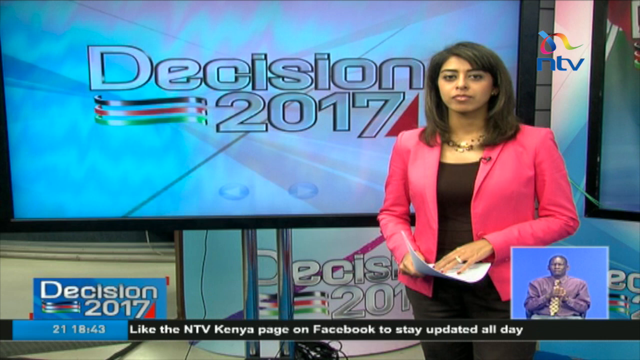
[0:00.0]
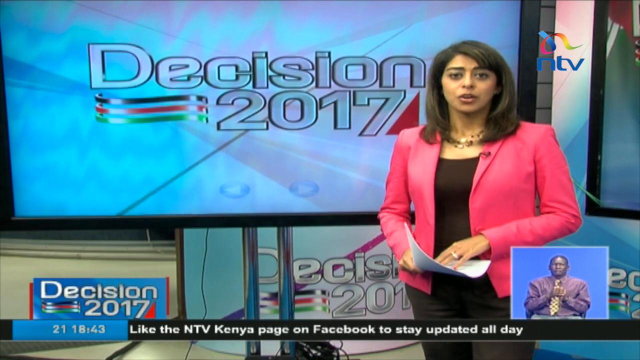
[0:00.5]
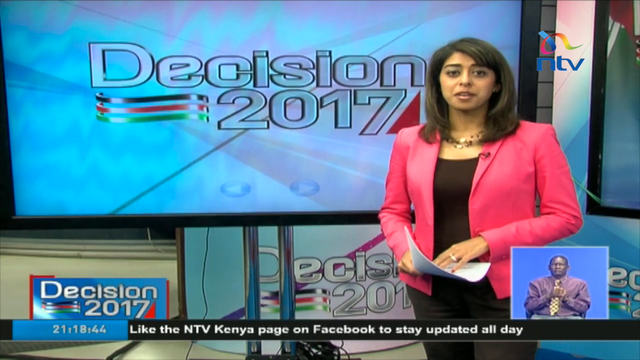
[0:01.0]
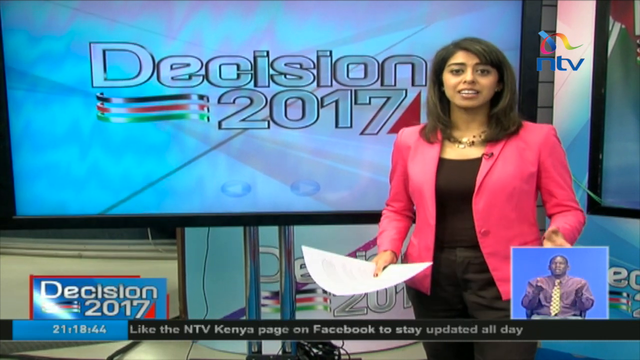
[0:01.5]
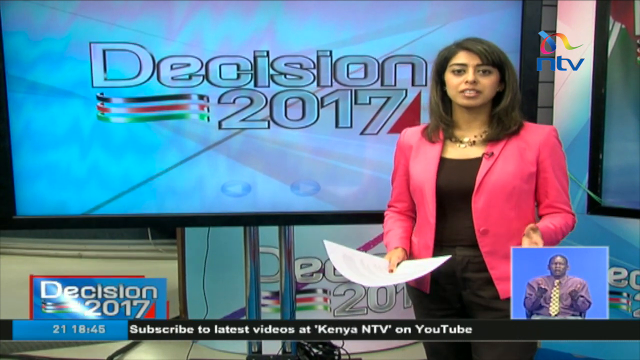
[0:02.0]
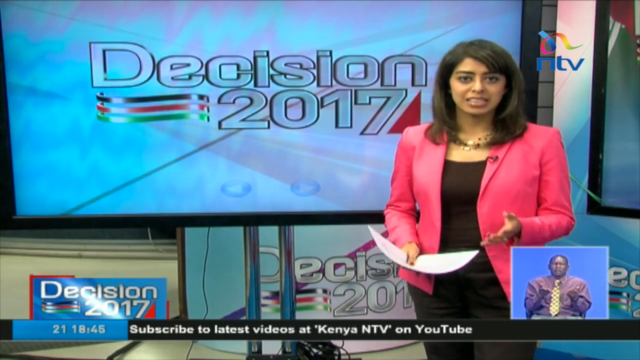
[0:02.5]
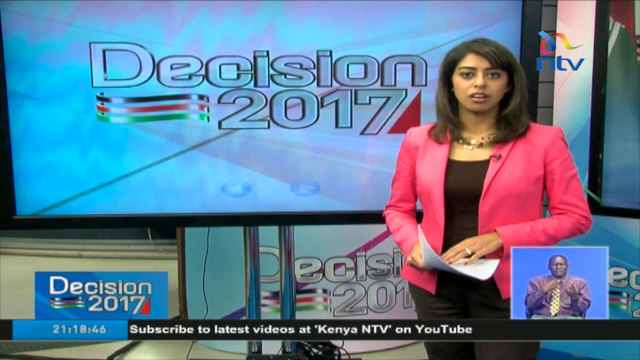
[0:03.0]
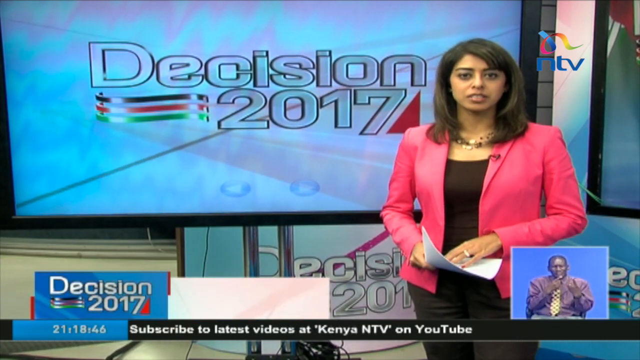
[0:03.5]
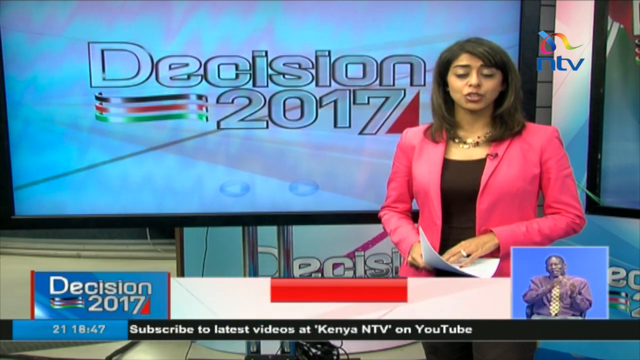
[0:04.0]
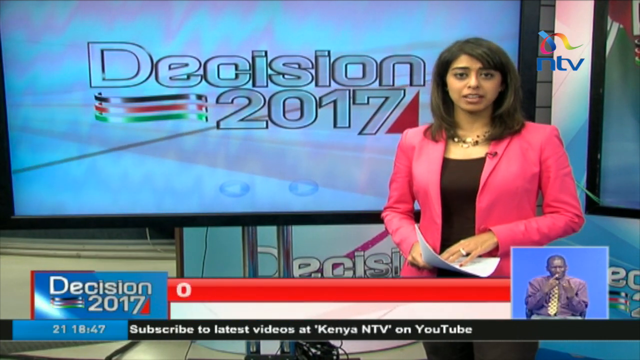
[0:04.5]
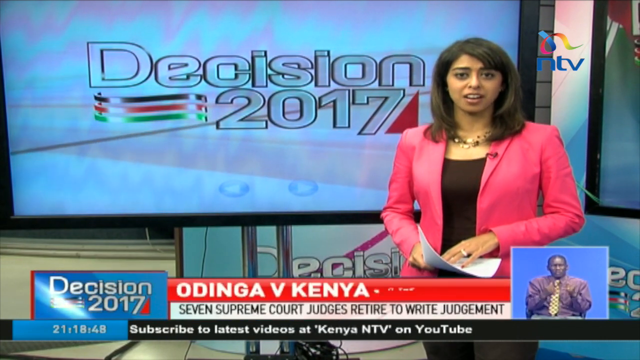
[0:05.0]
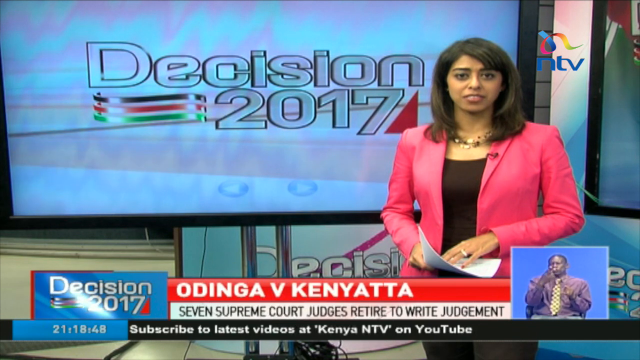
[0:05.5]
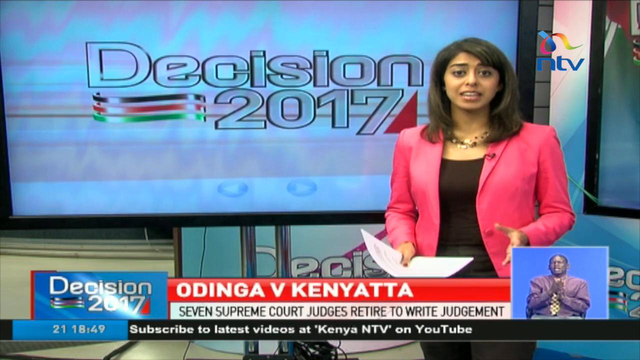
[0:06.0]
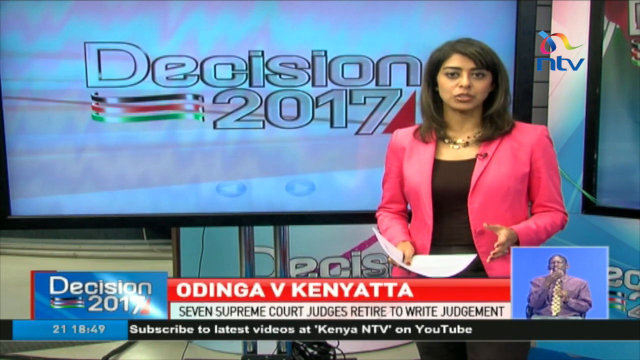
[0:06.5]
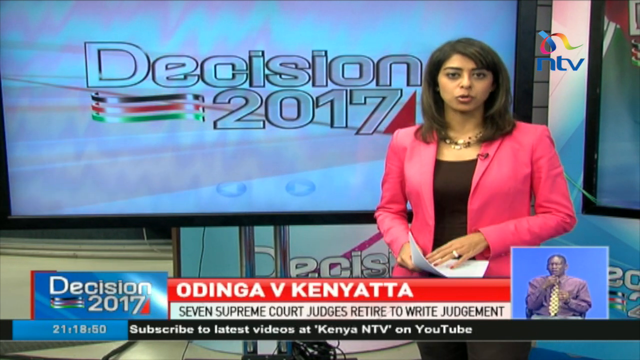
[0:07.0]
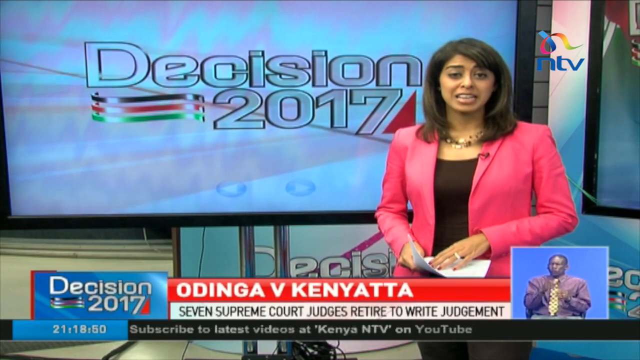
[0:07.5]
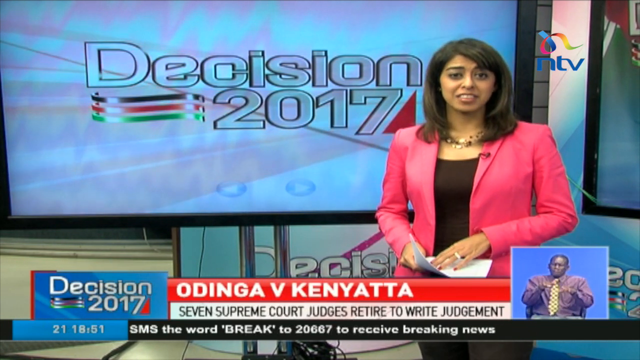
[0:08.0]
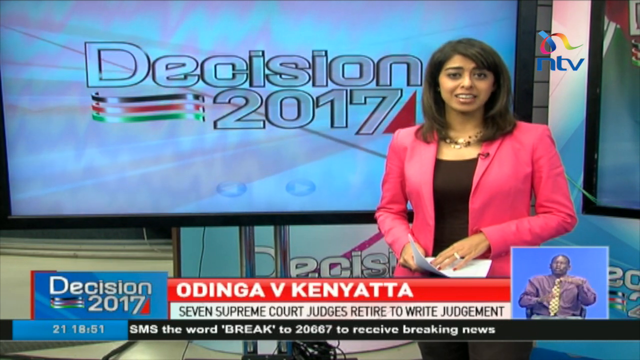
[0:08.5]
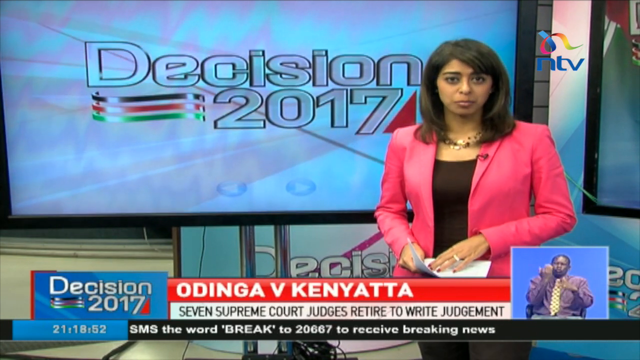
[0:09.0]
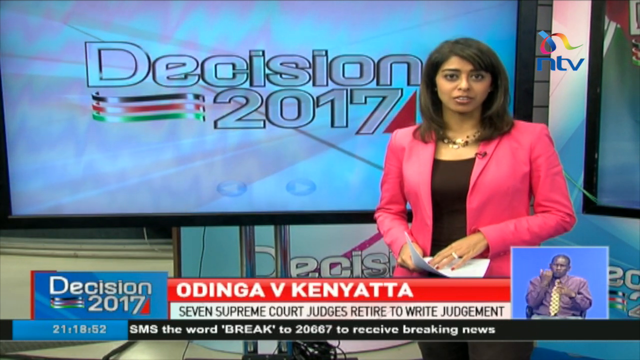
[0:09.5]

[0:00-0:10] A female news reporter stands in front of a screen. She wears a dark pink blazer with a black shirt and black bottom pants. In the bottom right-hand corner, a small square frame with a blue background shows an African man in a light purple shirt doing sign language, like an ASL interpreter. The screen behind the woman says "Decision 2017." A label comes on at the bottom giving the reporter's name, "Odinga V Kenyatta," and underneath it says "Seven Supreme Court judges retire to write judgment." The woman speaks, holding a few sheets of white paper that she kind of just holds in front of her.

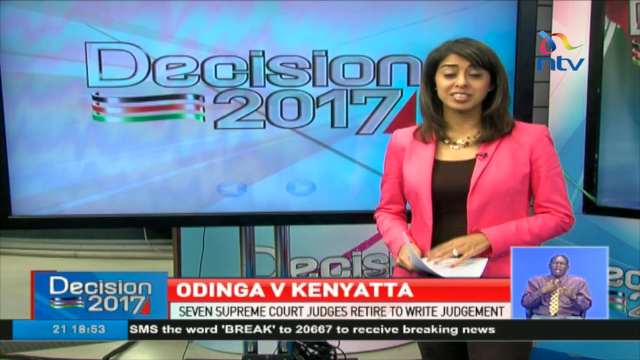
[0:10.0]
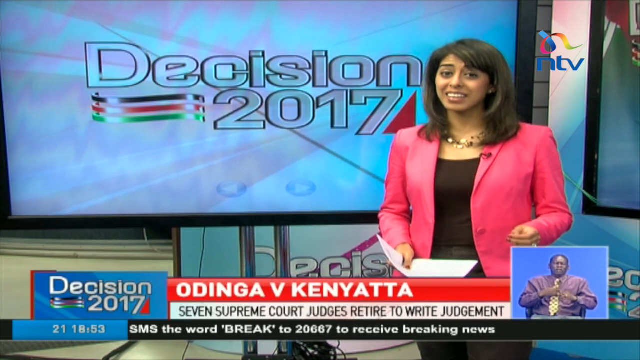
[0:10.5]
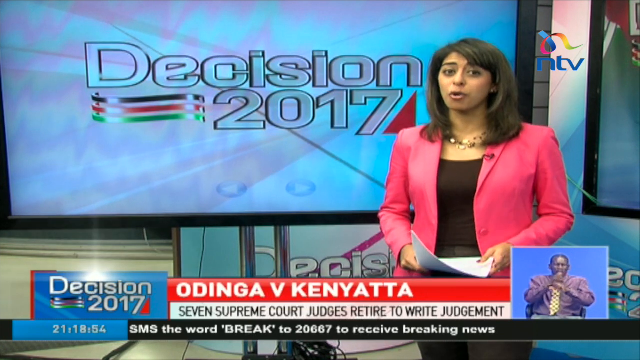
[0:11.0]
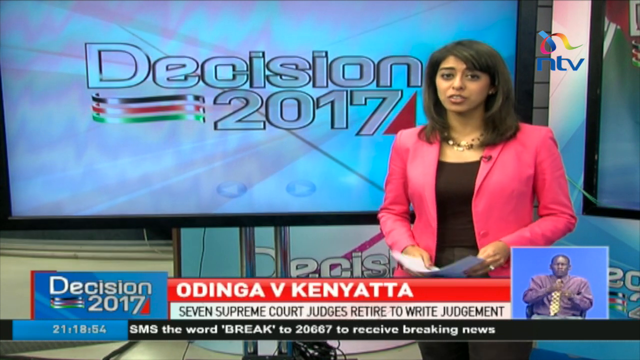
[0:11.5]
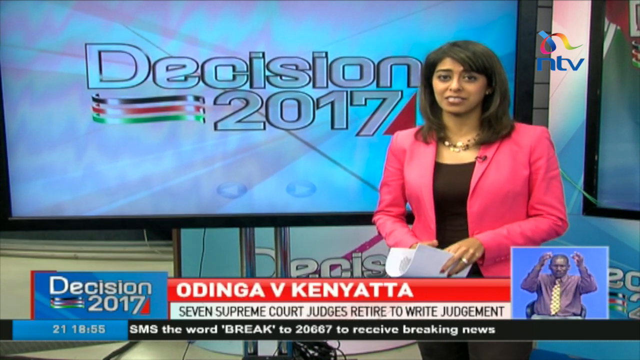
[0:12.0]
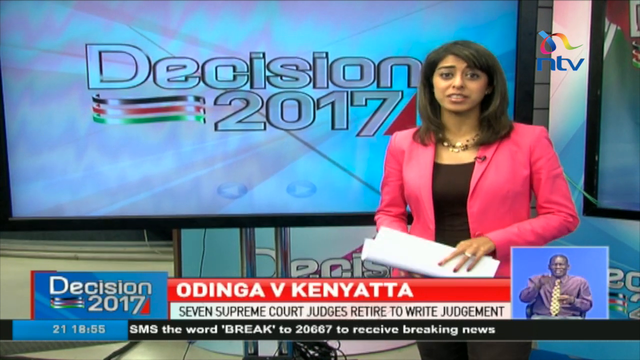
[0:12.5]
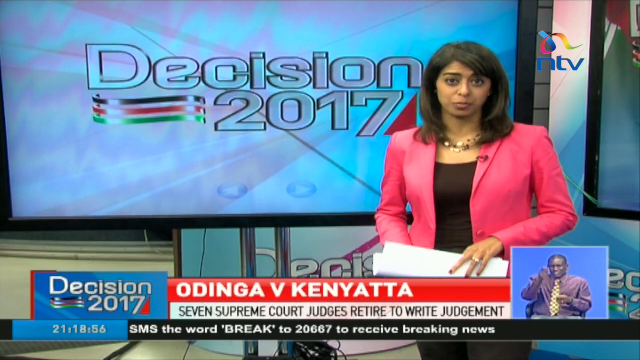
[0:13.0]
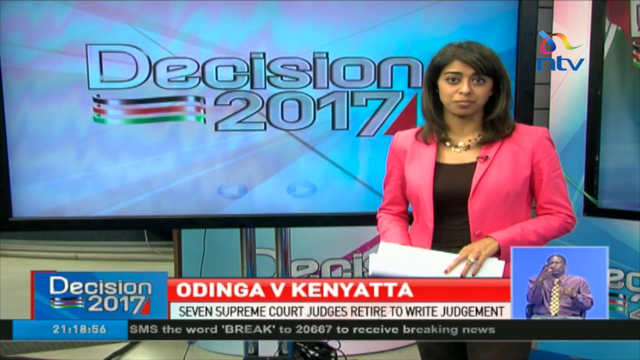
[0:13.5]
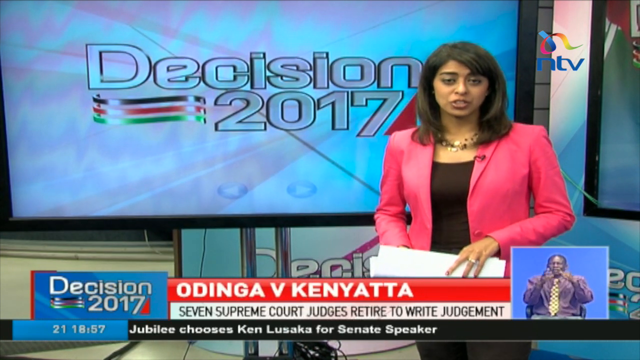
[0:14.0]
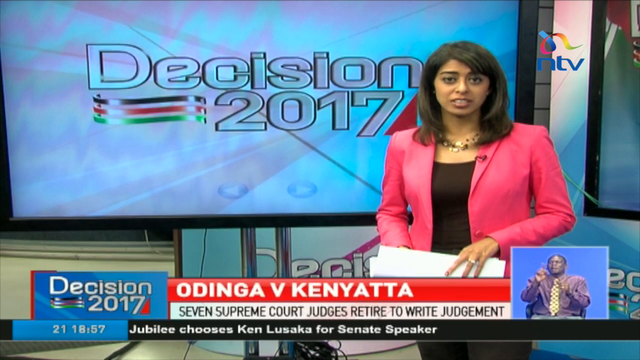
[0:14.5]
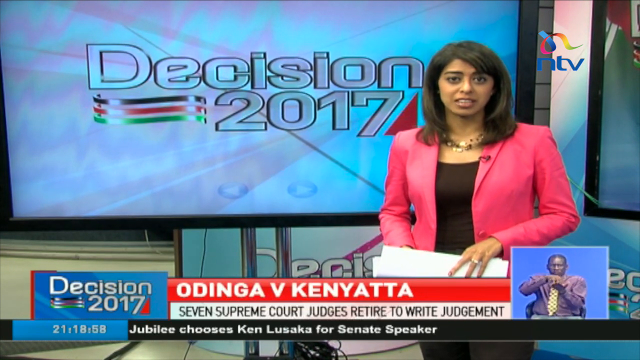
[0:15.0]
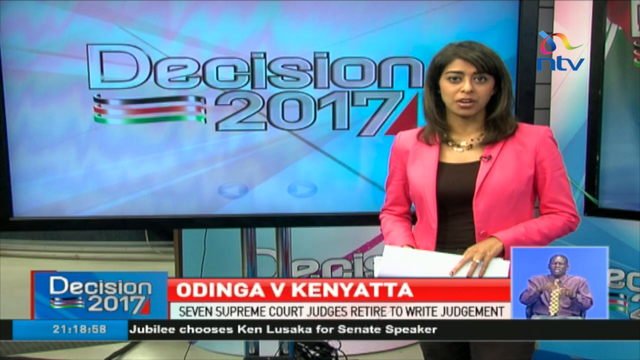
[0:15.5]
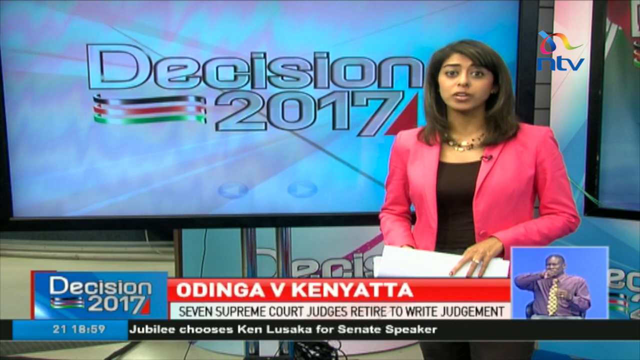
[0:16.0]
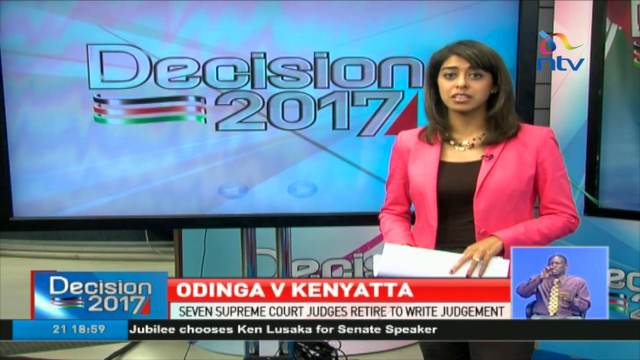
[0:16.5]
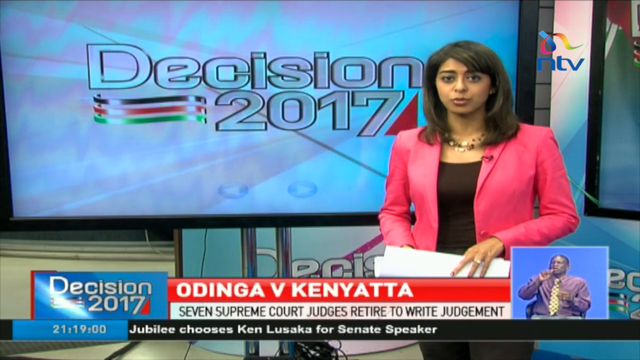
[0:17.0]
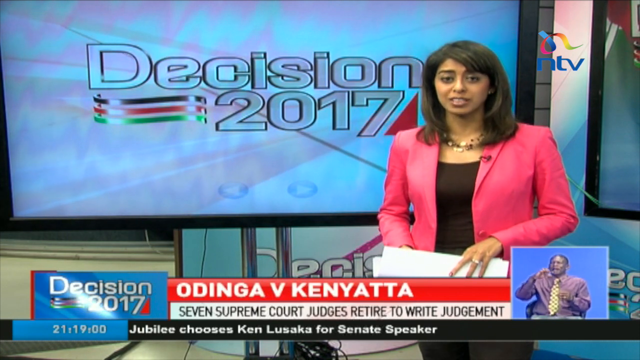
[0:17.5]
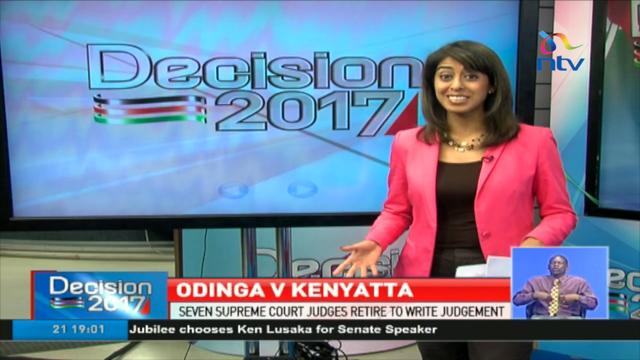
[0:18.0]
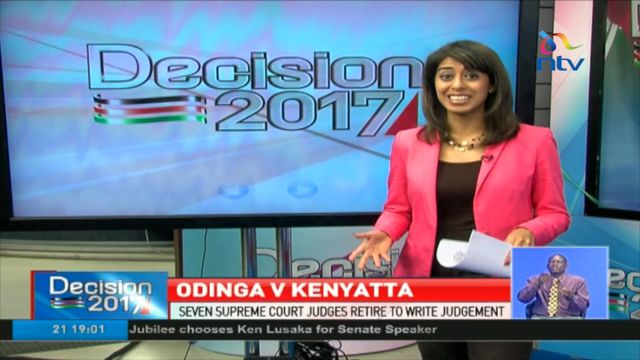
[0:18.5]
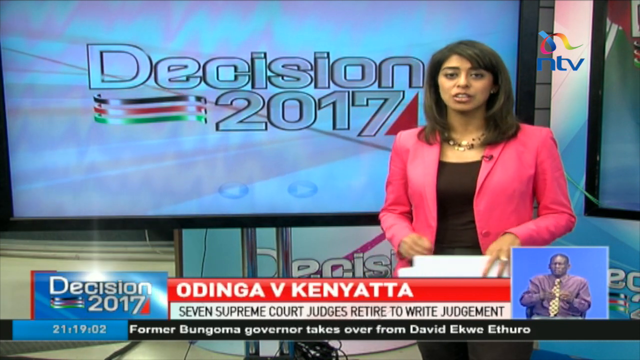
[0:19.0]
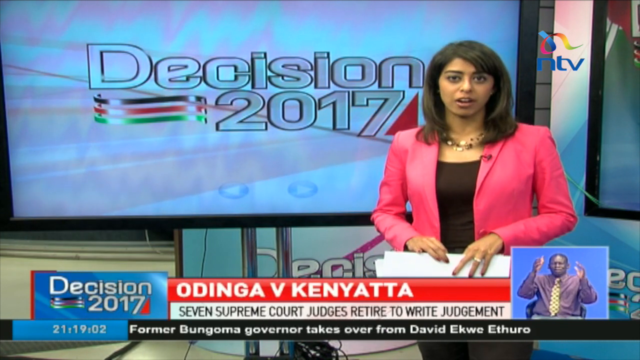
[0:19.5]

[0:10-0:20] A female news reporter stands in front of a screen that says "Decision 2017," along with a small image of waving lines in the colors of the Kenyan flag. At the bottom of the screen her name appears as "Odinga V Kenyatta," and below it says "Seven Supreme Court judges retired to write judgment," most likely the story she is covering. She wears a dark pink blazer with a black top and a gold necklace and holds a stack of papers, which she kind of moves around and folds in half as she speaks. On the bottom right of the screen, a small square frame shows an African man in a light purple shirt and yellow tie doing sign language.